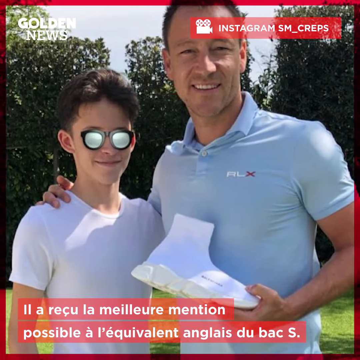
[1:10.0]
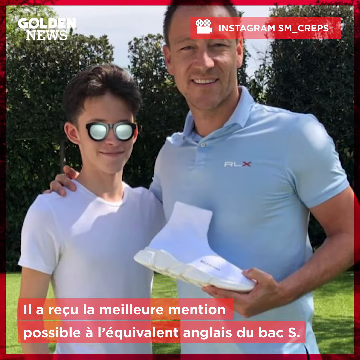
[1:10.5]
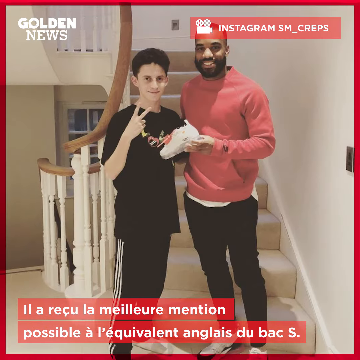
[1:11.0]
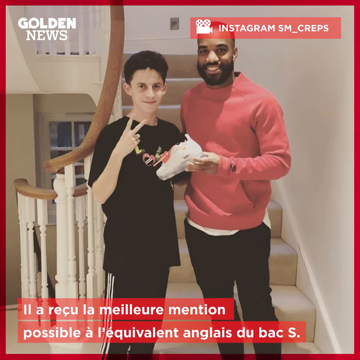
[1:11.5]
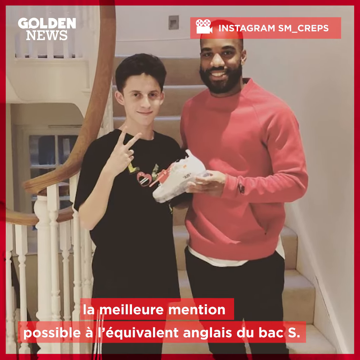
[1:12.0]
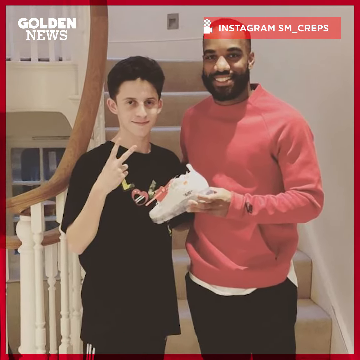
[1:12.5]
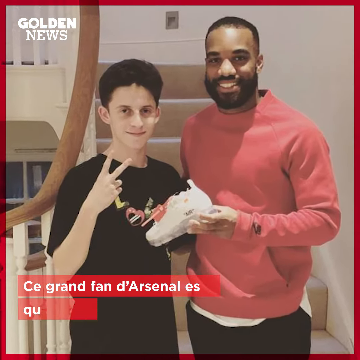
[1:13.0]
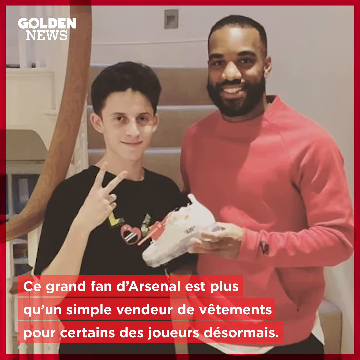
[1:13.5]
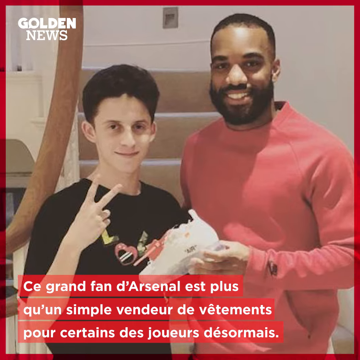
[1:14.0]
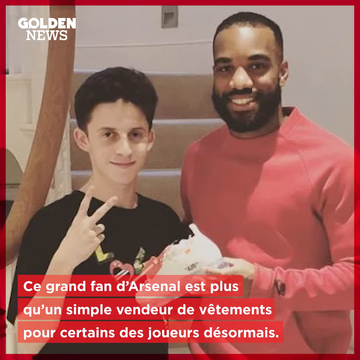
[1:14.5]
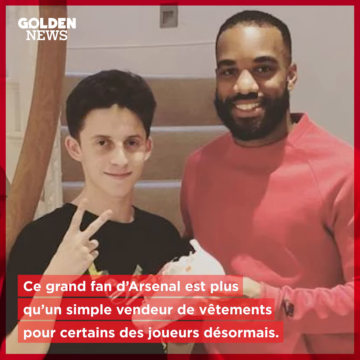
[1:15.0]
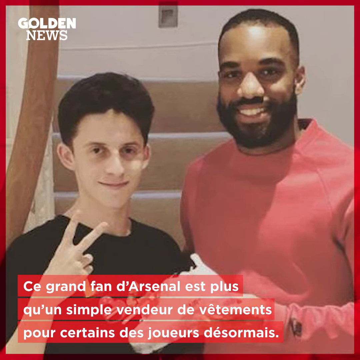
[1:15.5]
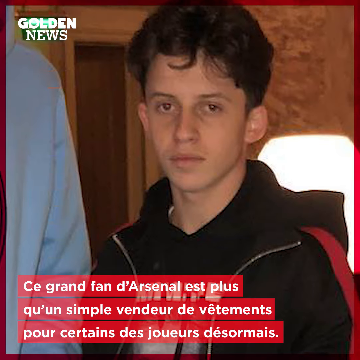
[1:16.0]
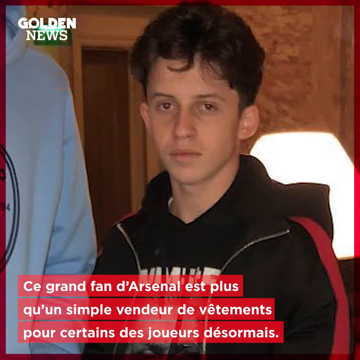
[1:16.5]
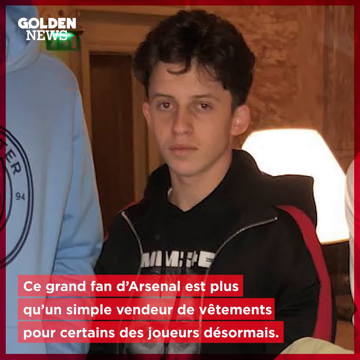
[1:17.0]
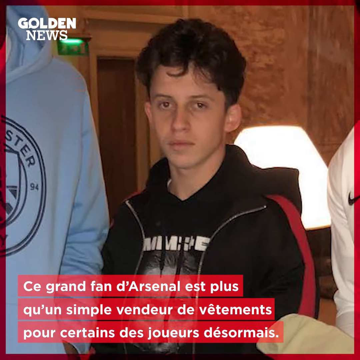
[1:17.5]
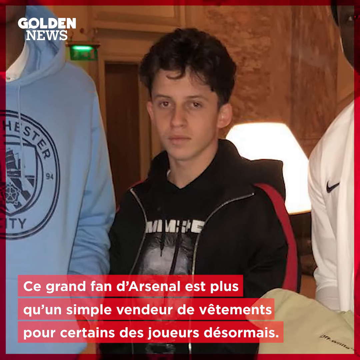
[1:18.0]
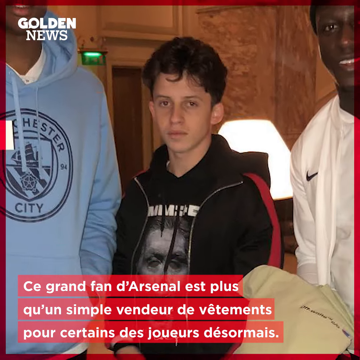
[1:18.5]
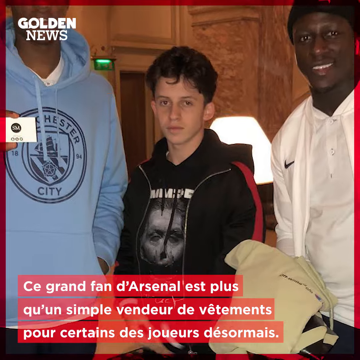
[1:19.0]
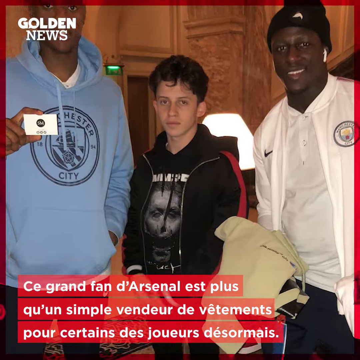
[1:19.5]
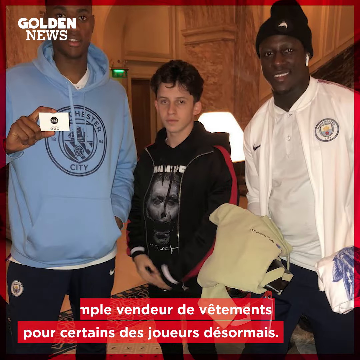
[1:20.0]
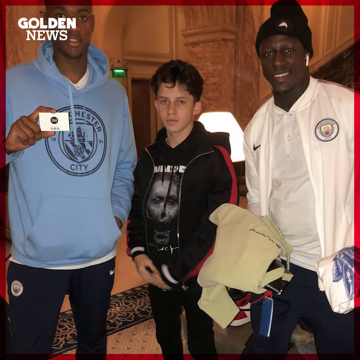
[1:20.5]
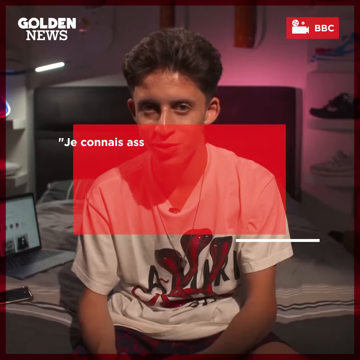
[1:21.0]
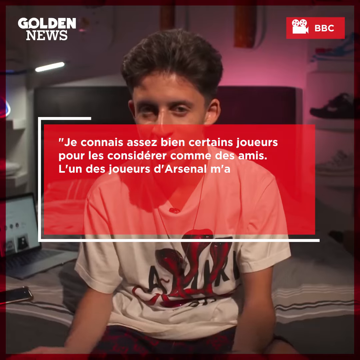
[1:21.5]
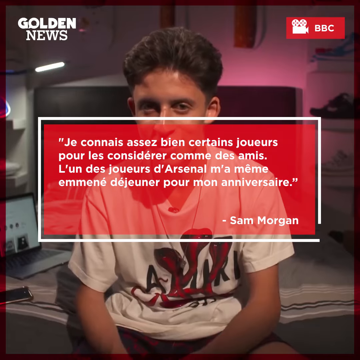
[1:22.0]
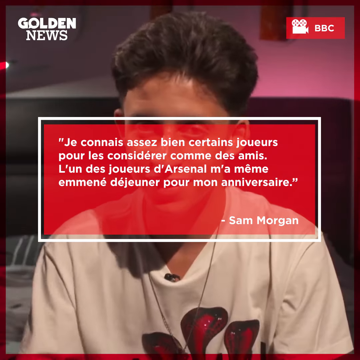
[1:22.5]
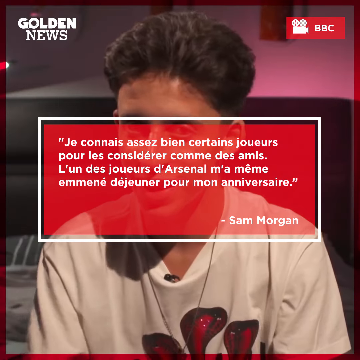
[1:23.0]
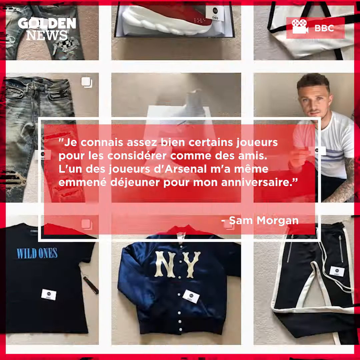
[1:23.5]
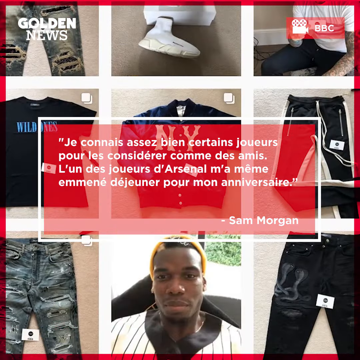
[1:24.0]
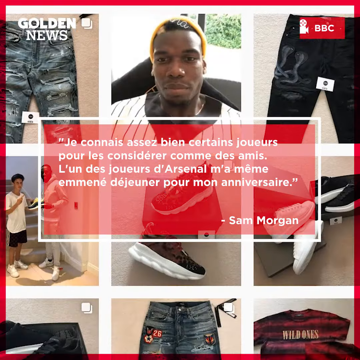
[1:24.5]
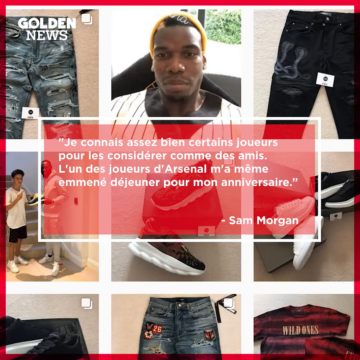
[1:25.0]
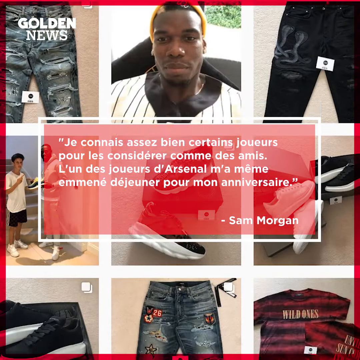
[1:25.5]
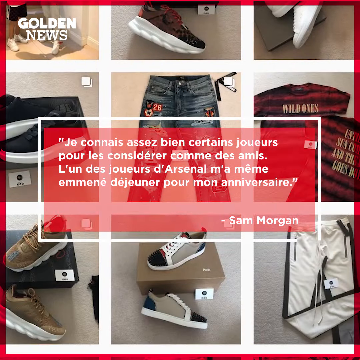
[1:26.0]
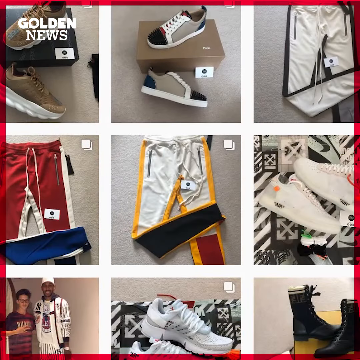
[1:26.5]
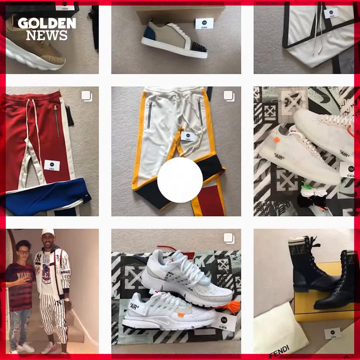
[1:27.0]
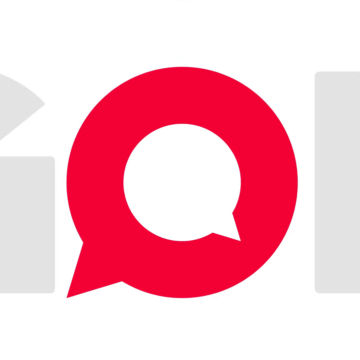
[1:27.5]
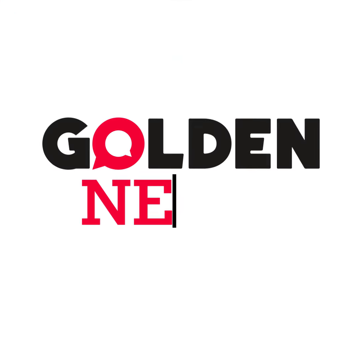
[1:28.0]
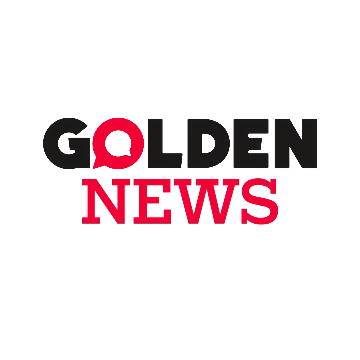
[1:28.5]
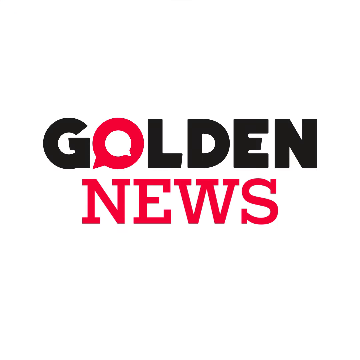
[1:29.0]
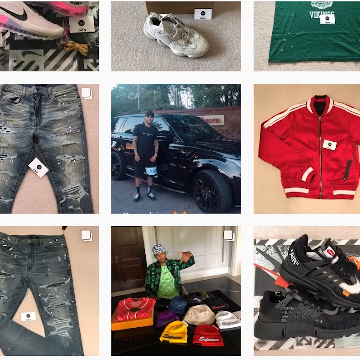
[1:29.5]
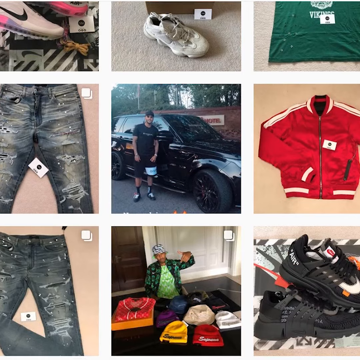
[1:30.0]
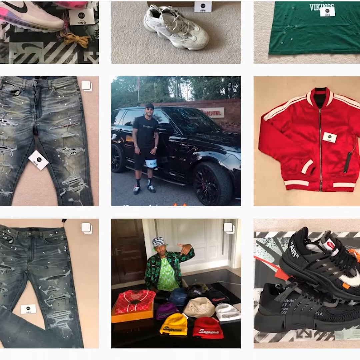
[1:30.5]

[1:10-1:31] An image shows Sam Morgan standing next to a footballer who holds a white shoe, then transitions to a different image of Sam Morgan next to a footballer in a red sweatshirt holding a white shoe in his hand, while Sam Morgan holds up a peace sign to the camera. Another transition shows Sam Morgan standing between two footballers, each with a uniform or his team's logo on his outfit. The man on the right holds what look to be designer clothes, and the man on the left holds Sam Morgan's business card, a white rectangular card with a black circle in the middle containing the letters "SM". A short shot then shows Sam Morgan talking to a camera, followed by what appear to be Sam Morgan's Instagram posts: square photos of various pieces of clothing such as pants, jackets, and shirts. Over the posts is a large red text box with white text in French, with Sam Morgan's name at its bottom right corner, apparently his quote about his business. The video scrolls down through the photos he has posted, and finally a transition shows the news station's logo, Golden News, on a white background, with the word "golden" in black except for the O in red, and the word "news" in red.